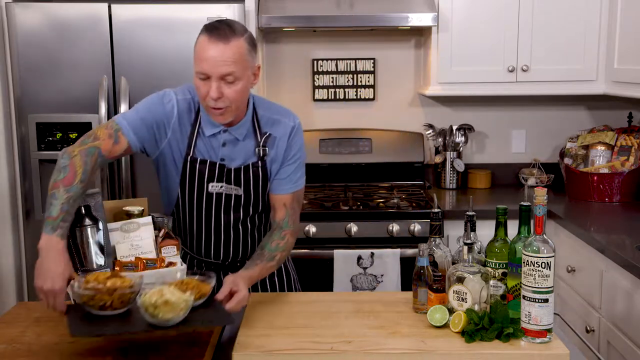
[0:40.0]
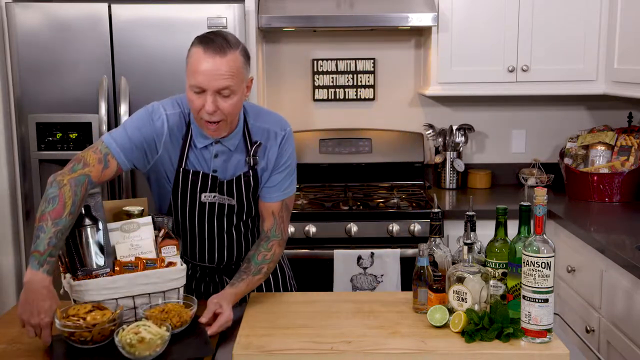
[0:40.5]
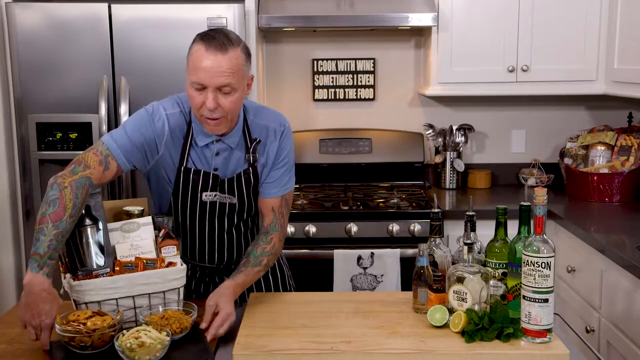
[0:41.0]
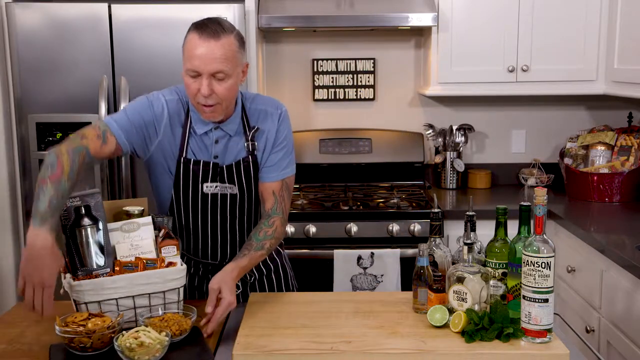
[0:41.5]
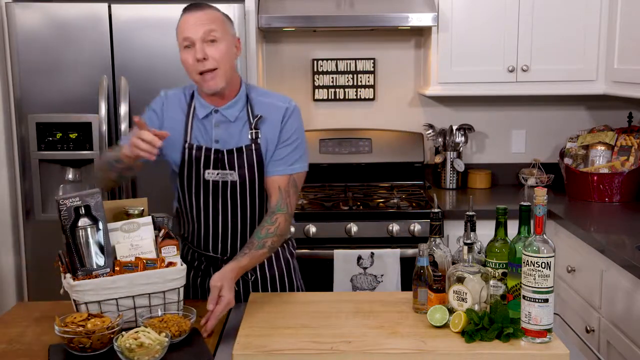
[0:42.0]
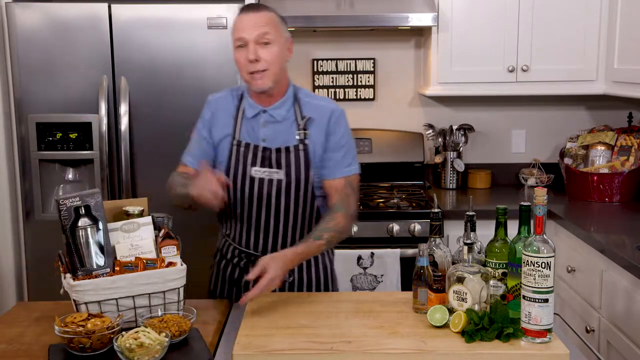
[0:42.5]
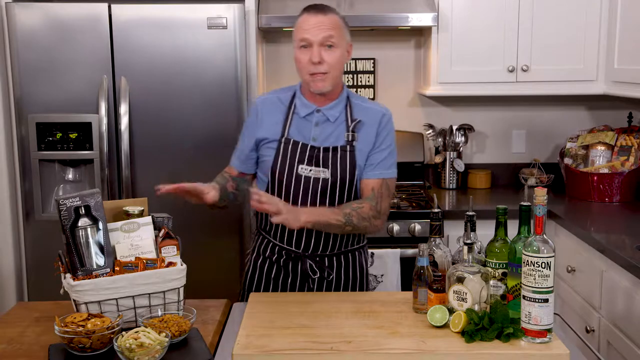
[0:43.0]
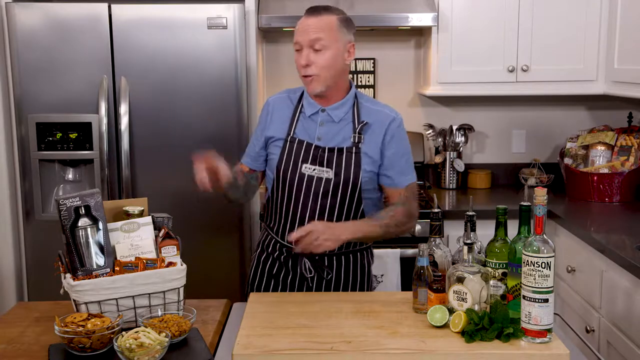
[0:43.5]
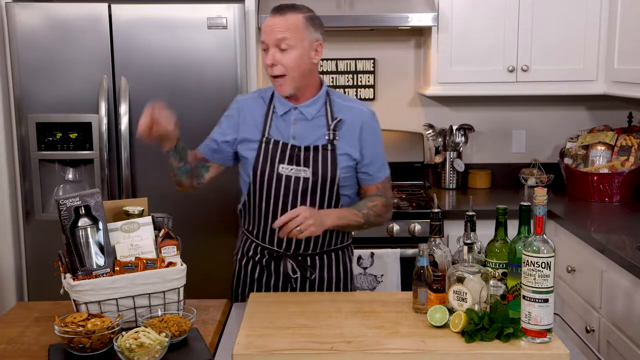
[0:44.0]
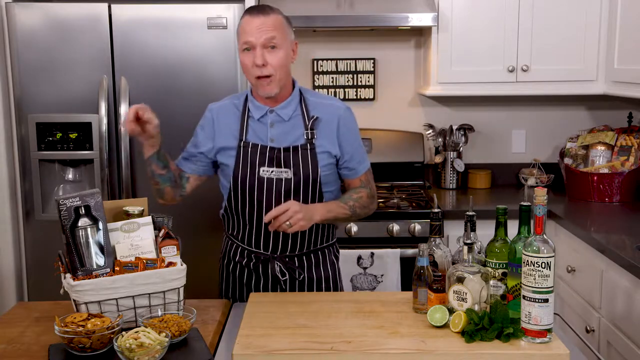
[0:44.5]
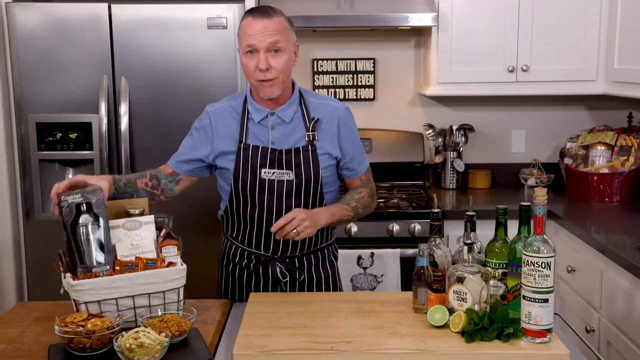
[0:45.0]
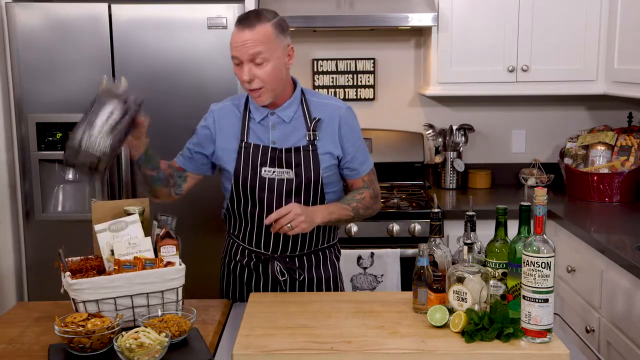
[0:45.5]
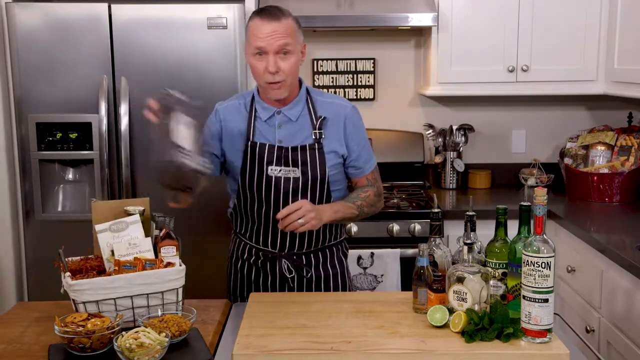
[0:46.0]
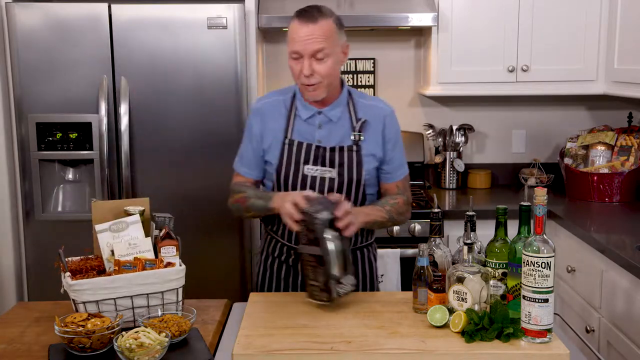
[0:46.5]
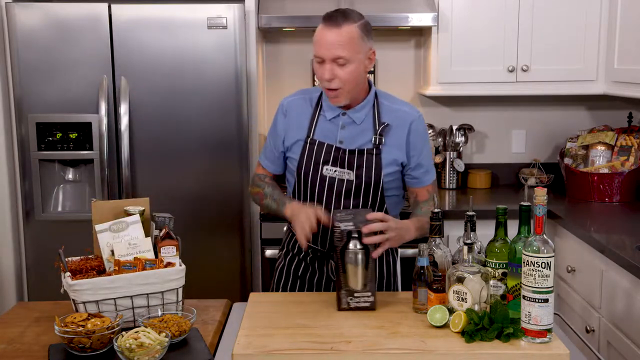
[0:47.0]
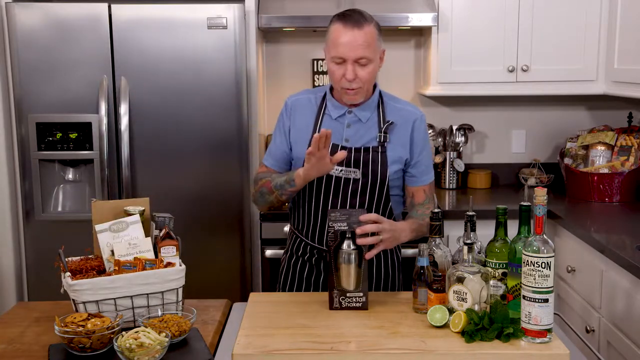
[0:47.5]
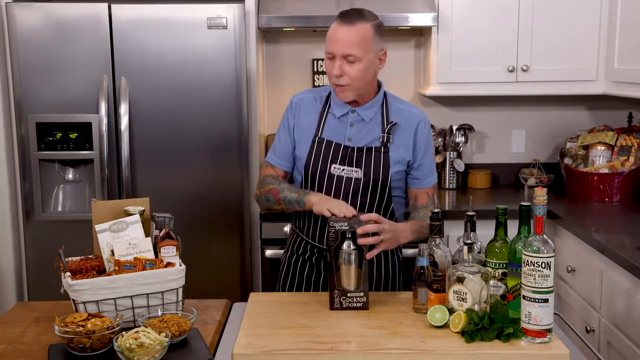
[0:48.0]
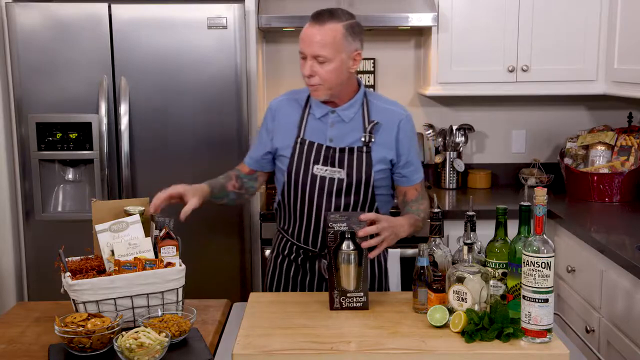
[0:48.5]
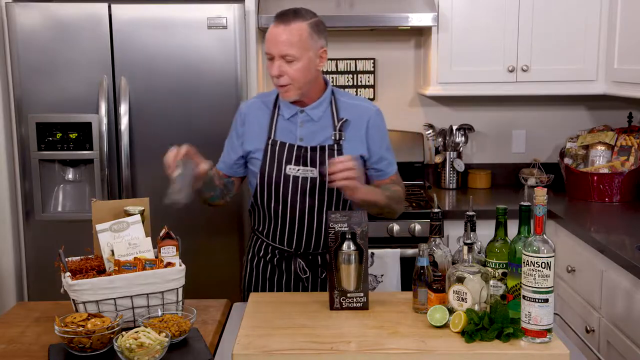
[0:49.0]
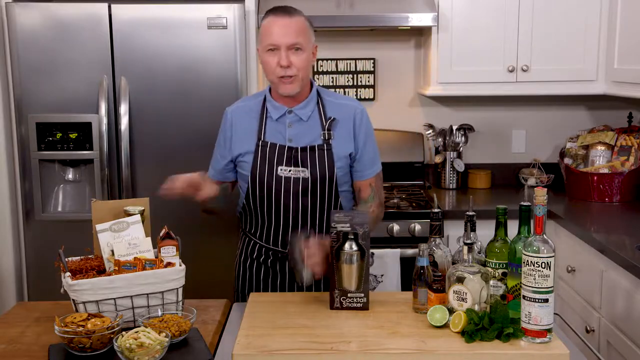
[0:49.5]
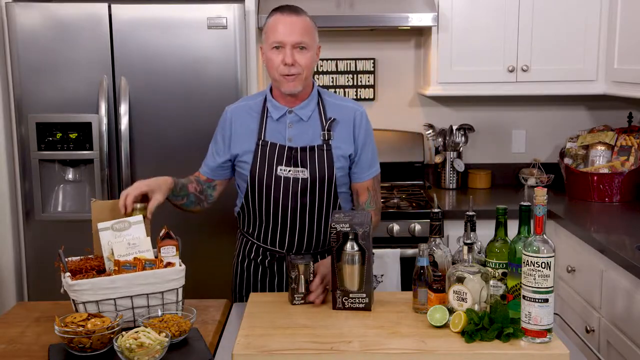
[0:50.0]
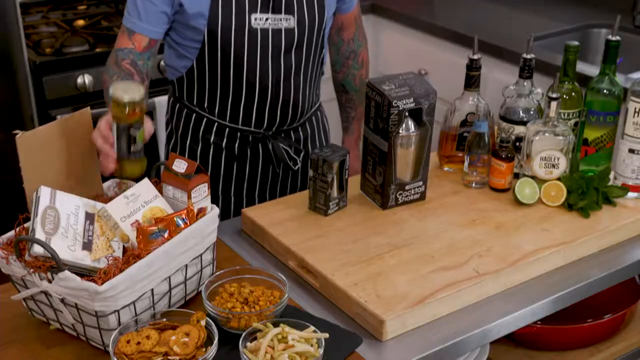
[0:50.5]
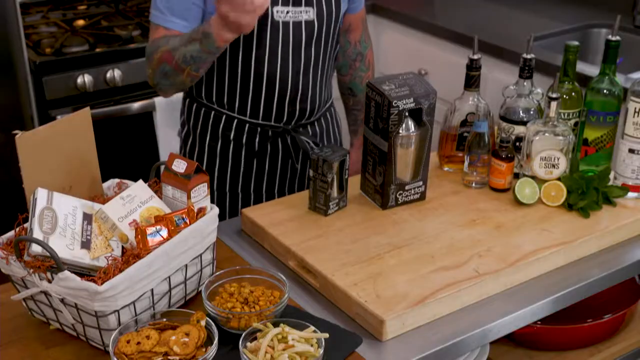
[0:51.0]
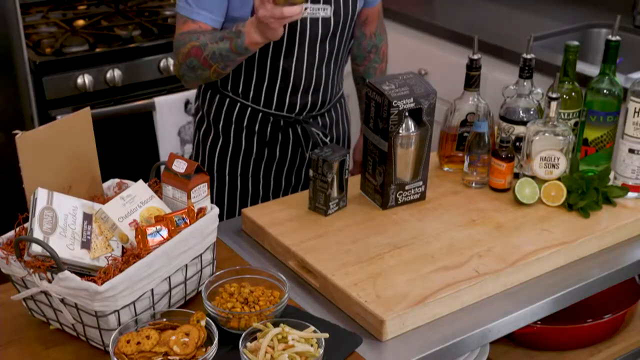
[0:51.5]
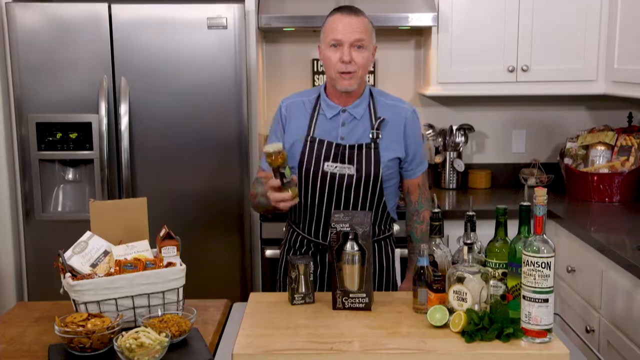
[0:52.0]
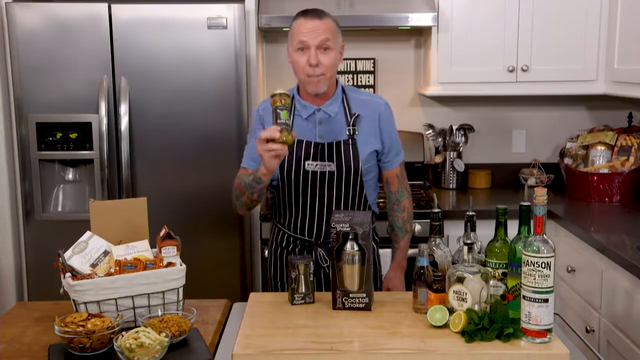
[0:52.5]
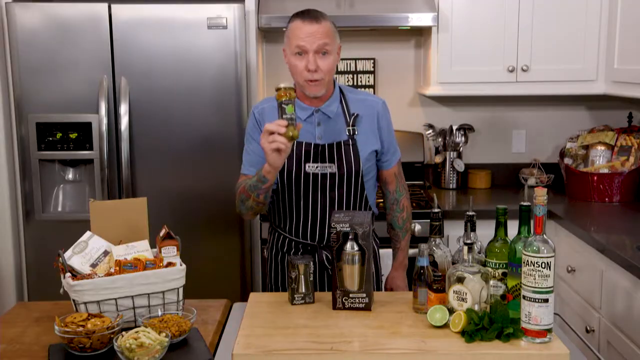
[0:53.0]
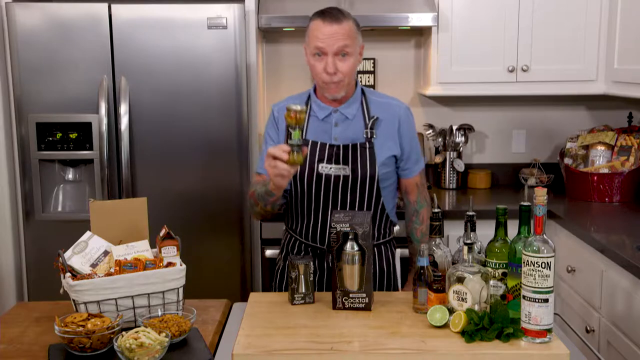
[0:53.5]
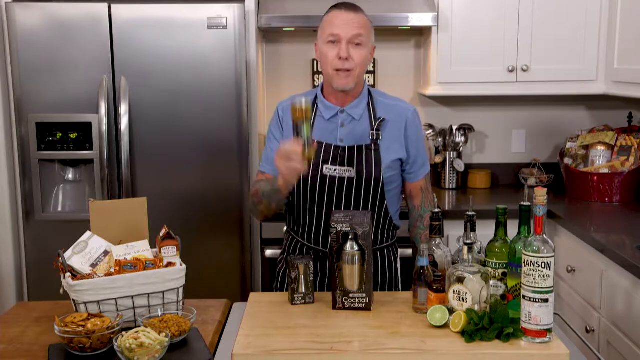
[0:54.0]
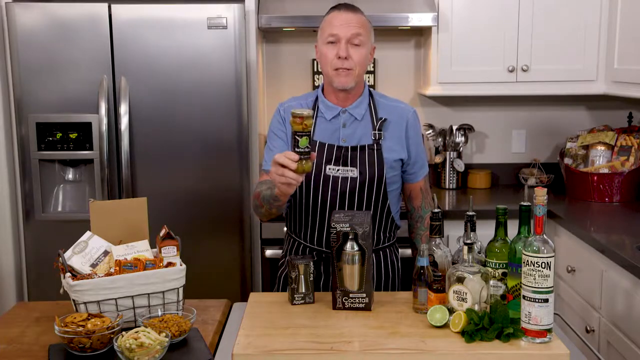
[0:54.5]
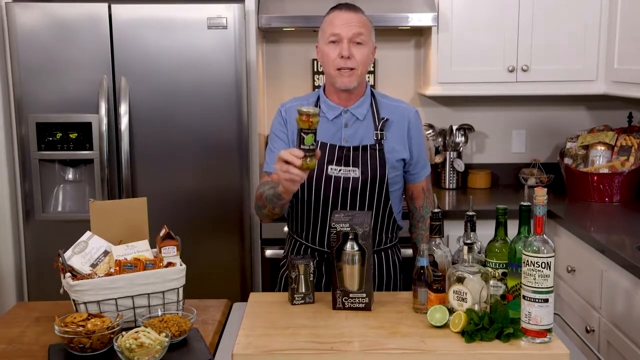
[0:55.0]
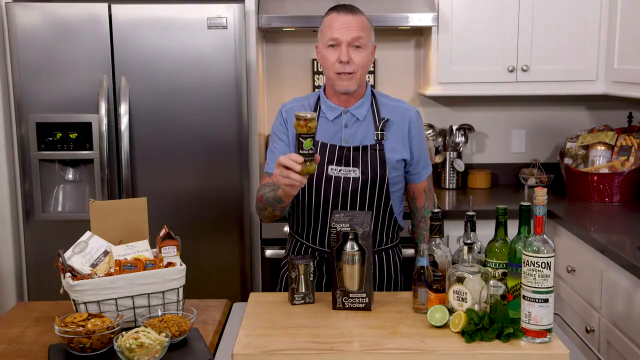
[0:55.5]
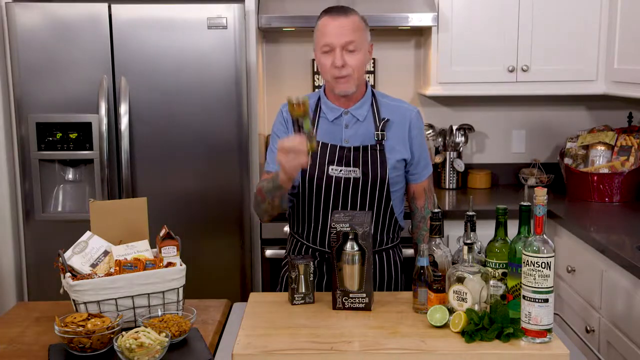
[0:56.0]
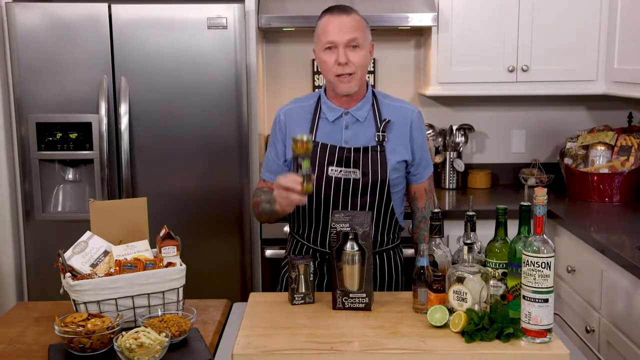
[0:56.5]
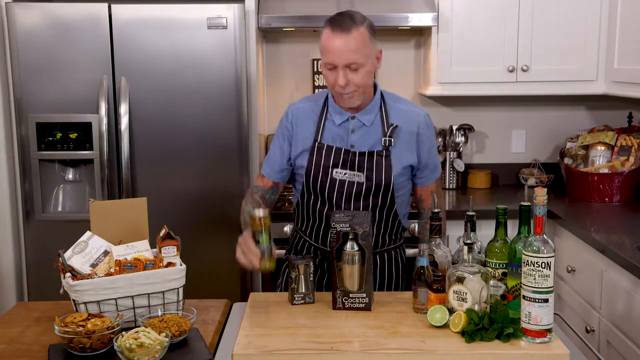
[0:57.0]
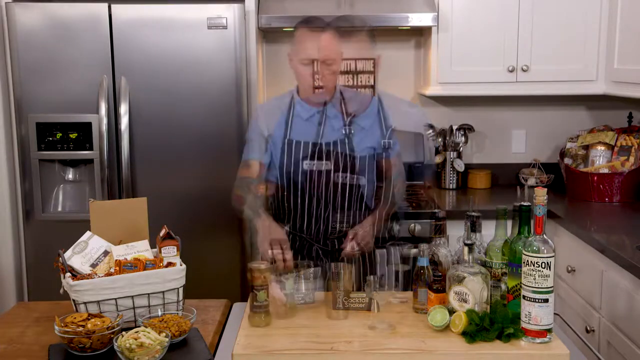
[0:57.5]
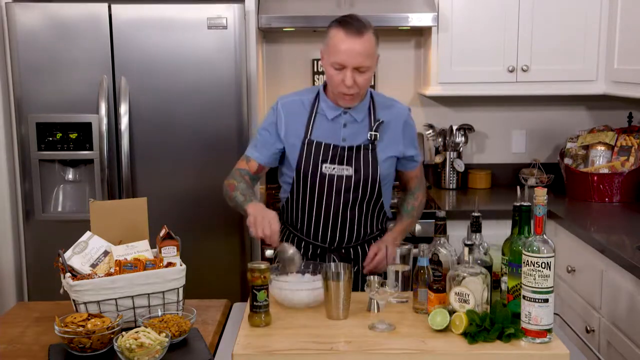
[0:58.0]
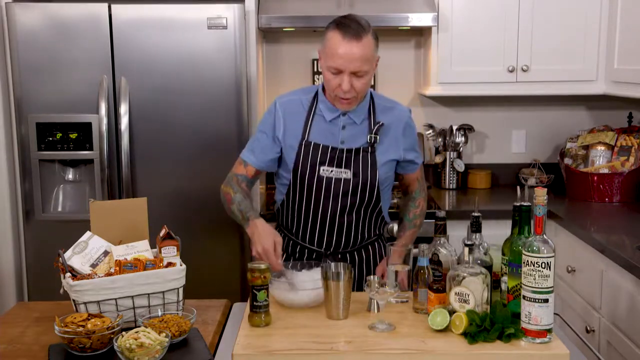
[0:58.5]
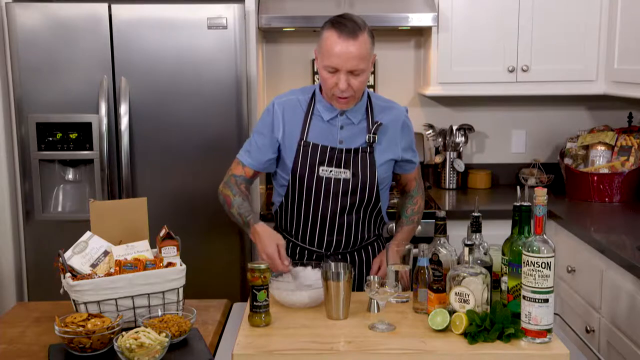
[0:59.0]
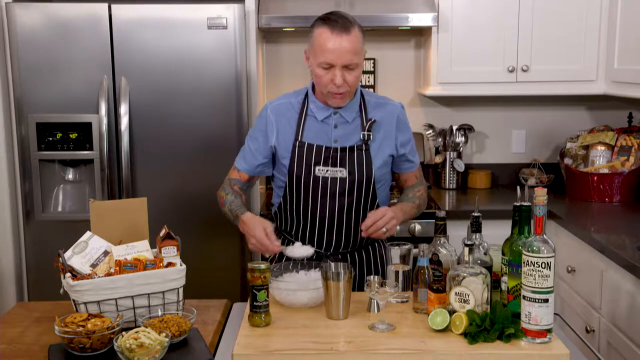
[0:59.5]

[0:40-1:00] The man puts aside the ingredients he emptied into three different bowls, including the bacon. He takes boxes of equipment out of the hamper and sets them to the side; one box says "cocktail shaker." He has what looks like ice and talks as he works. In the background there is a silver stand holding utensils, including silver spoons and a silver knife, and a basket that looks maroonish with something gold inside. He appears confident.